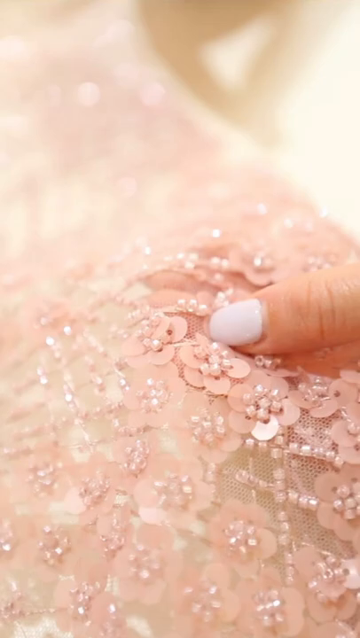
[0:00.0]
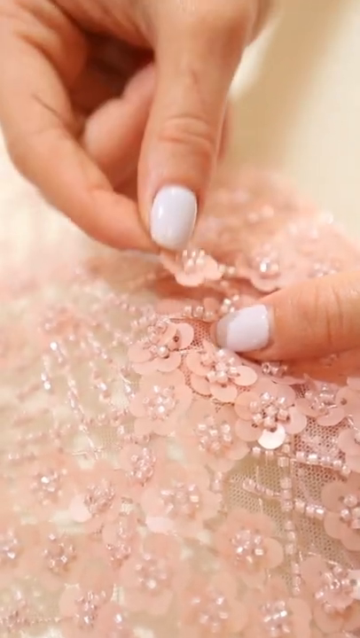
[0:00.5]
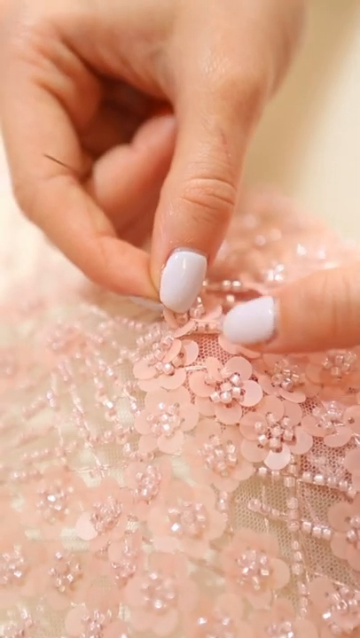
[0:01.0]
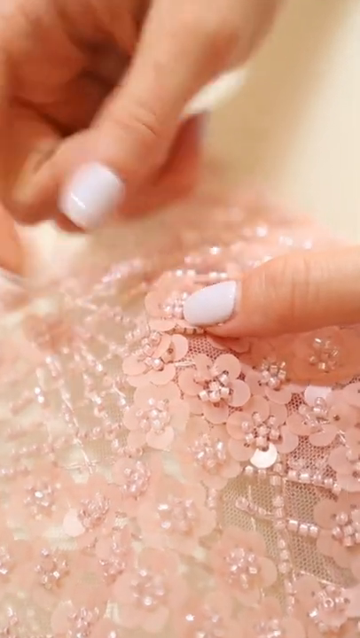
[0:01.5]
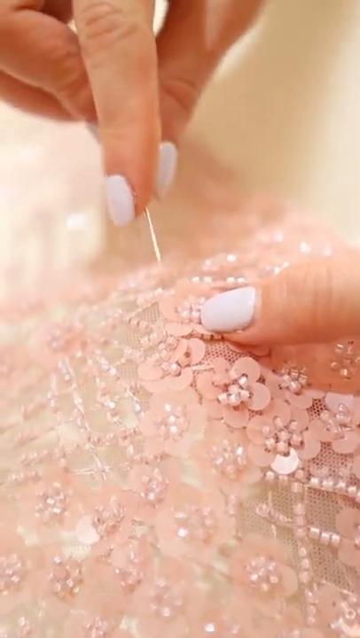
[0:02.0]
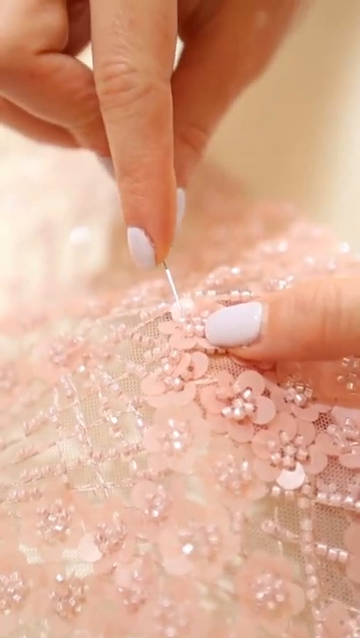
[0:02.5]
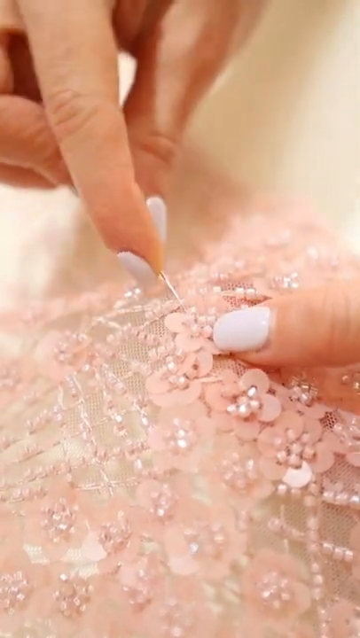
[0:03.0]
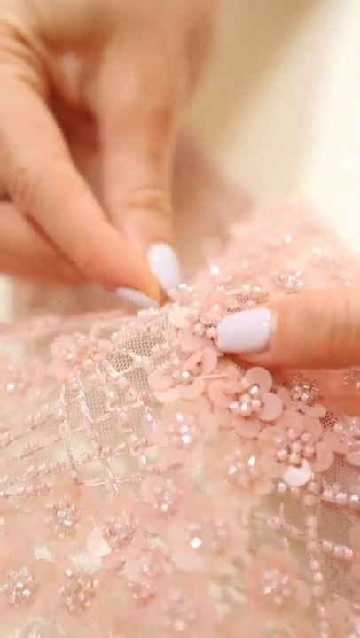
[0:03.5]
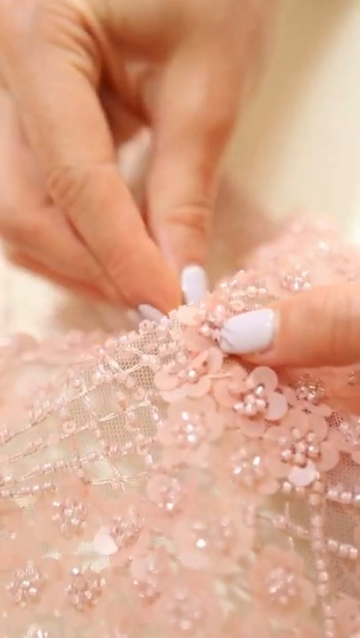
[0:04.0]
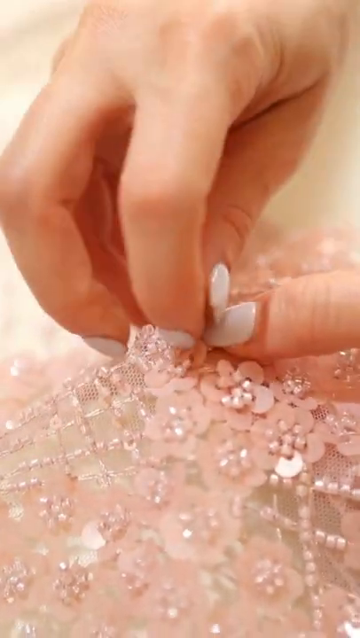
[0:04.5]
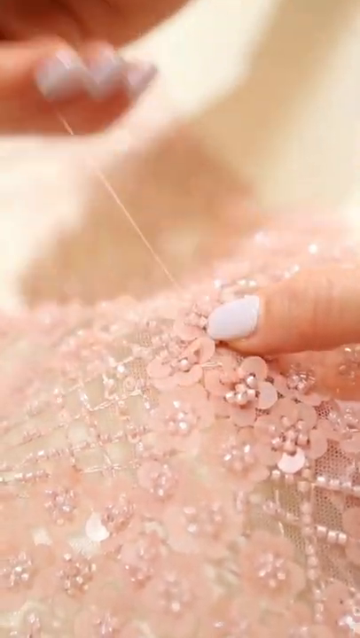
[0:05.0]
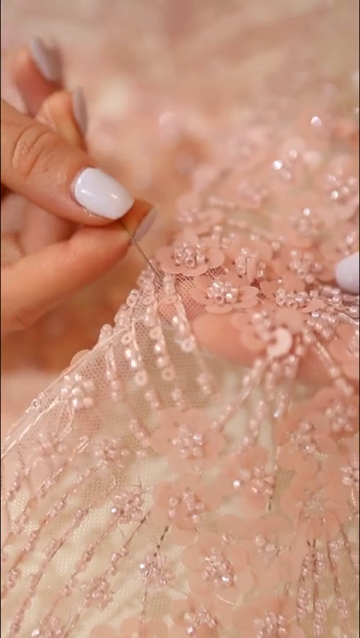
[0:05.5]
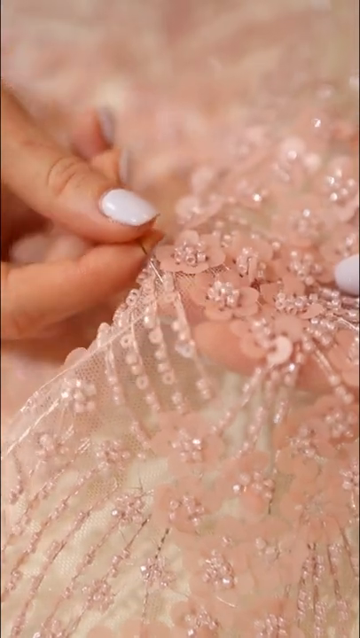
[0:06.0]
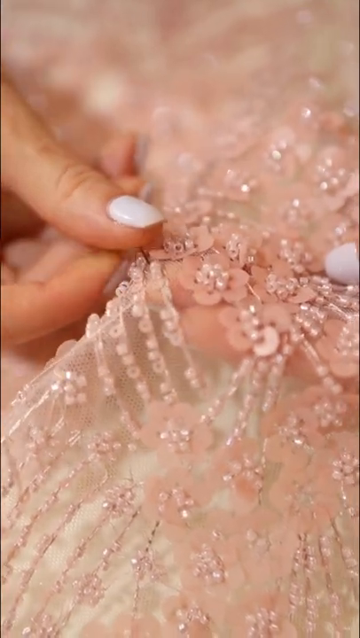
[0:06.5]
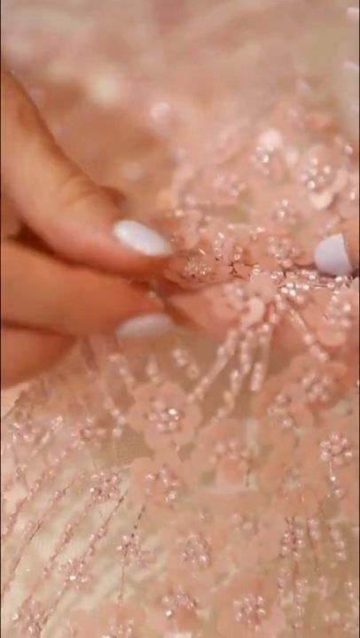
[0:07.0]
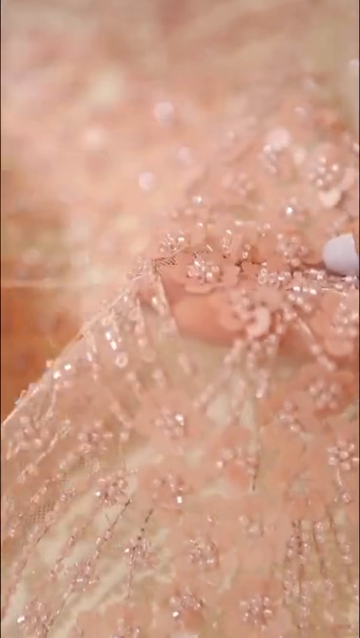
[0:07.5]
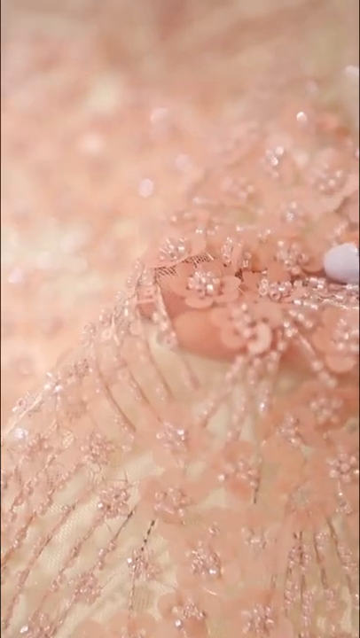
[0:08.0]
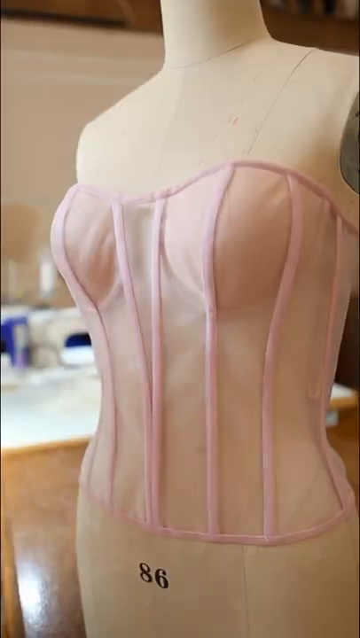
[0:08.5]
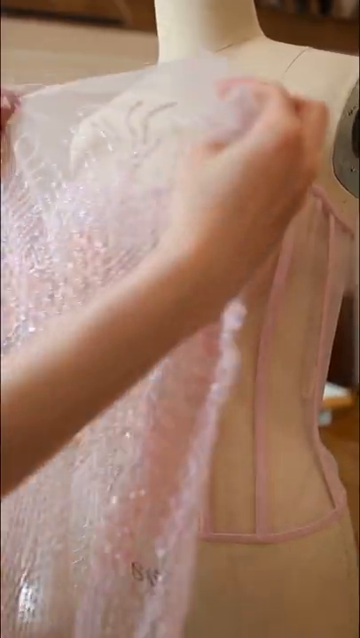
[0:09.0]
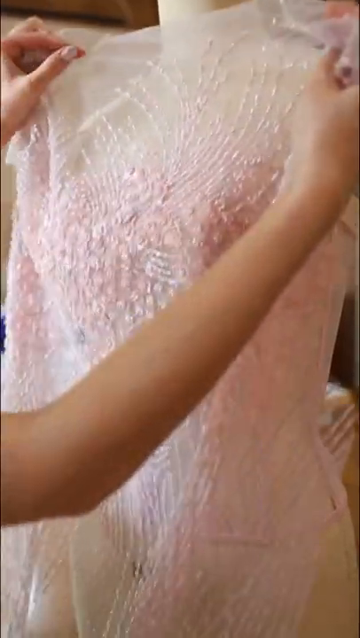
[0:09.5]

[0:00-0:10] Pale pink lace fabric is intricately designed with hundreds of tiny flower appliques adorned with tiny pink pearls, seven pearl adornments on each tiny flower. A lady's hands sew each applique by hand onto the delicate lace fabric; she wears white nail polish. She takes the fabric and places it up to a mannequin, getting ready to attach it to the bodice area. She drapes the fabric over the bodice of the mannequin, where the boning that will make up the base of what looks like a dress is visible. The dressmaker delicately hangs the lace fabric across the mannequin to see how it will lay against the bodice.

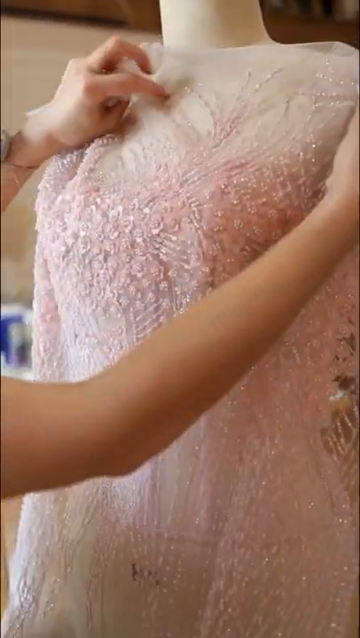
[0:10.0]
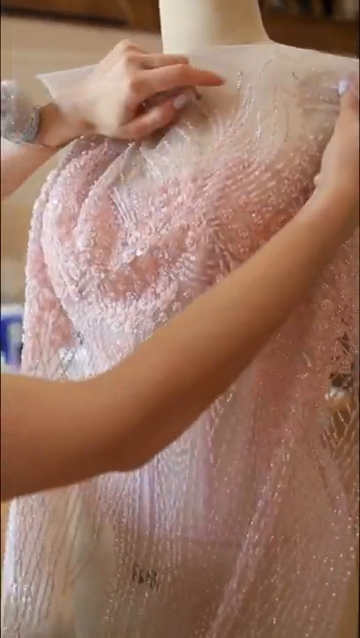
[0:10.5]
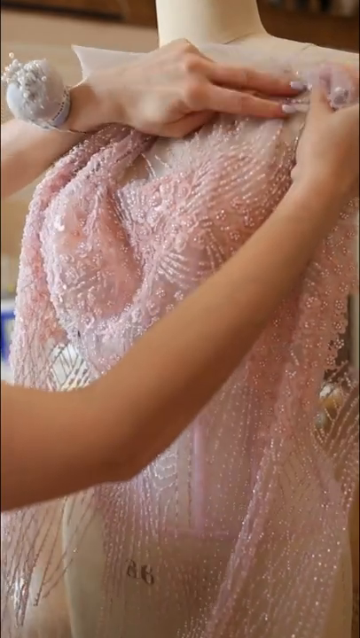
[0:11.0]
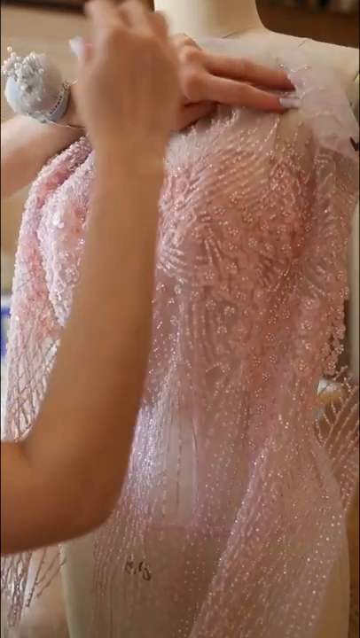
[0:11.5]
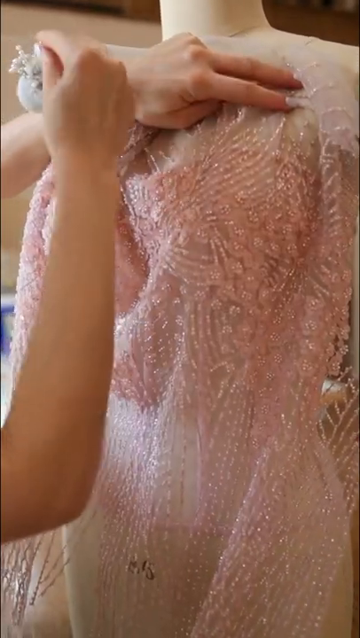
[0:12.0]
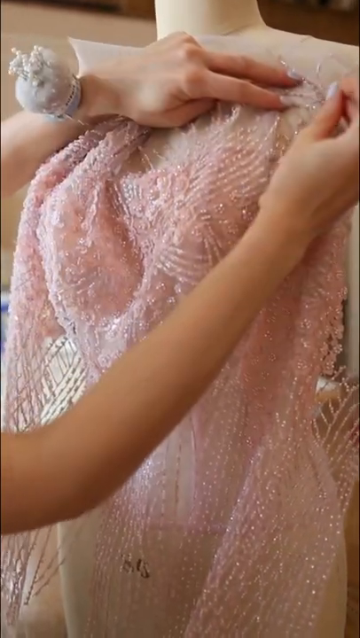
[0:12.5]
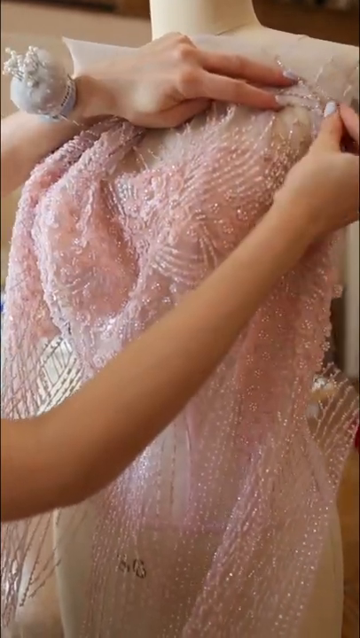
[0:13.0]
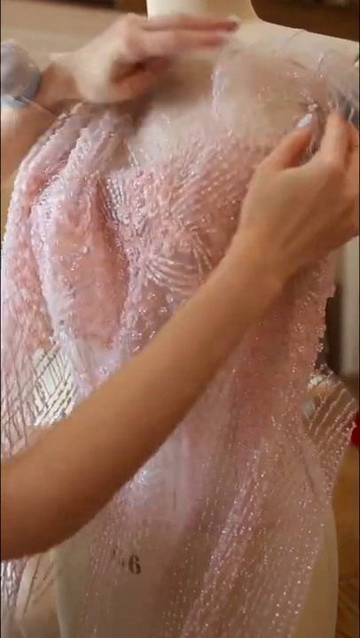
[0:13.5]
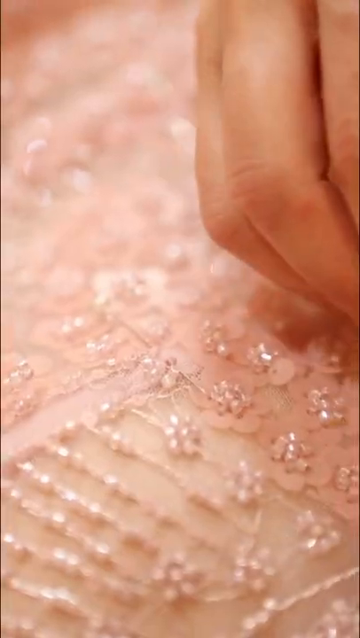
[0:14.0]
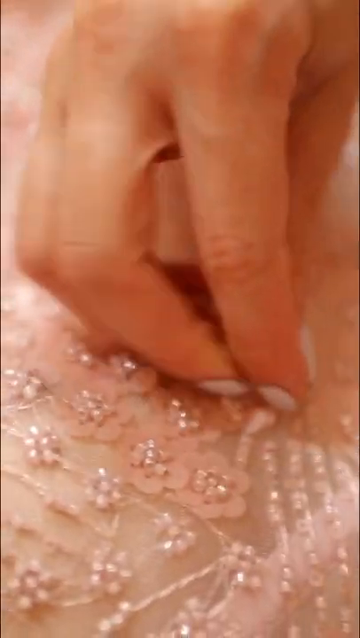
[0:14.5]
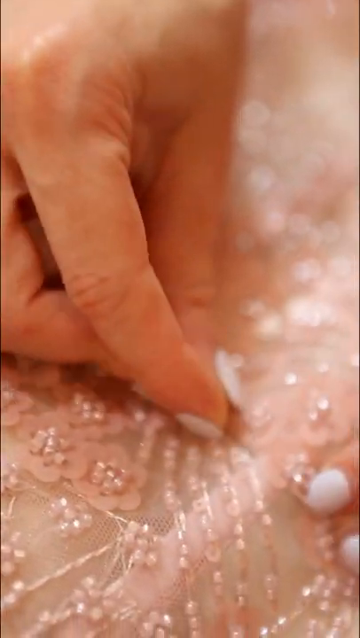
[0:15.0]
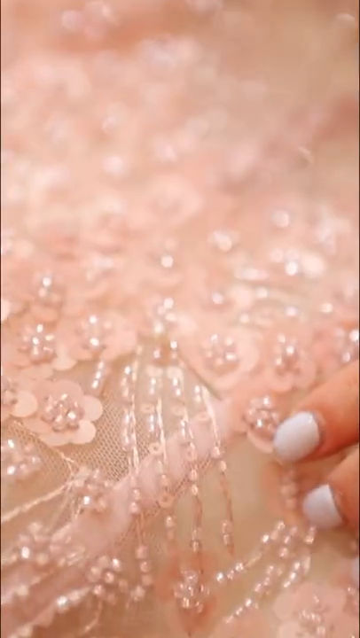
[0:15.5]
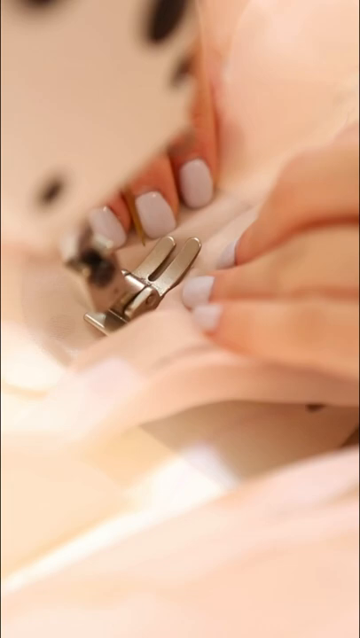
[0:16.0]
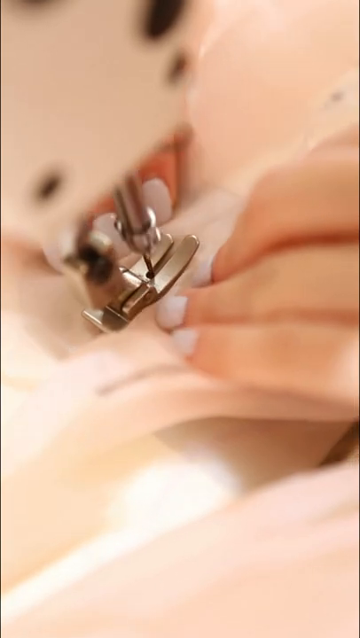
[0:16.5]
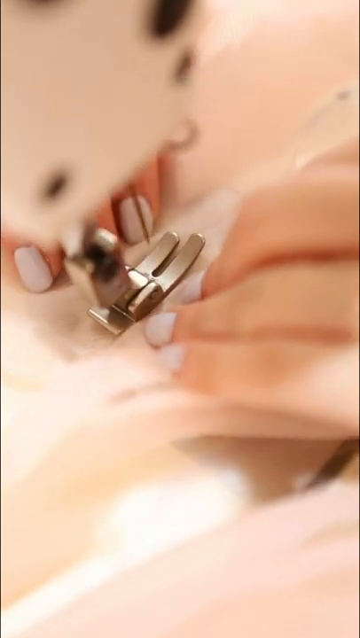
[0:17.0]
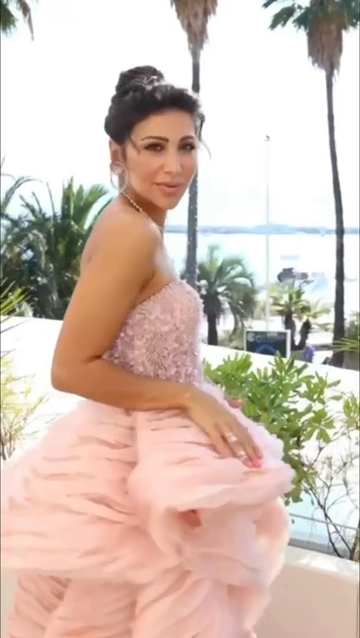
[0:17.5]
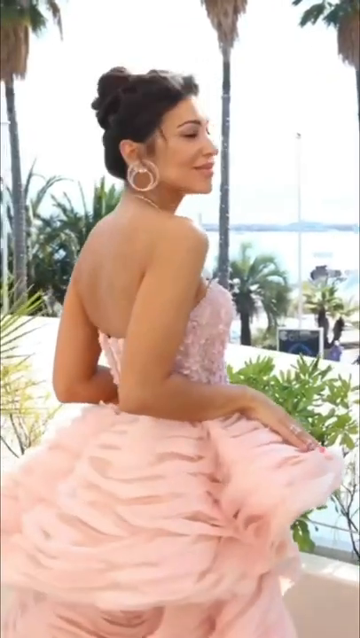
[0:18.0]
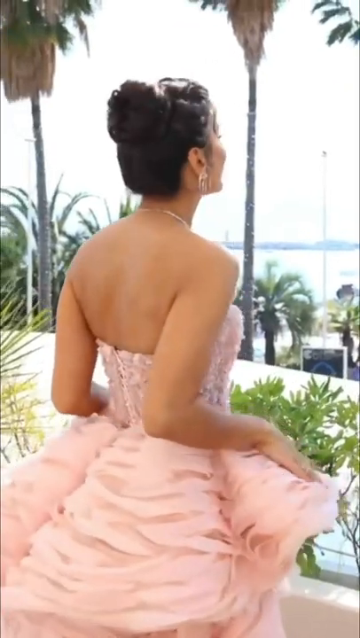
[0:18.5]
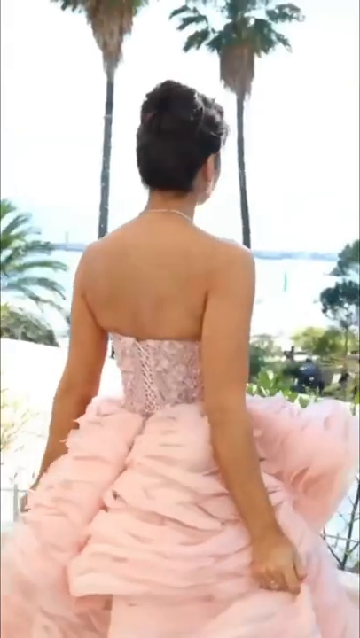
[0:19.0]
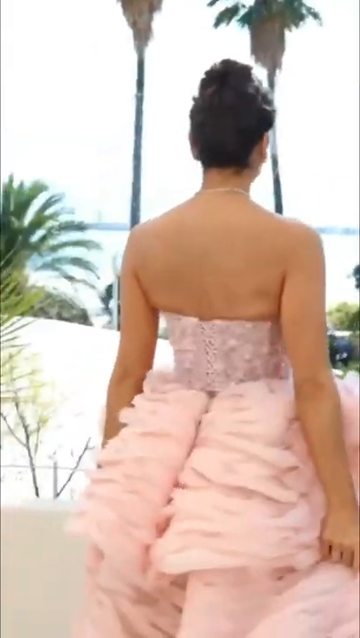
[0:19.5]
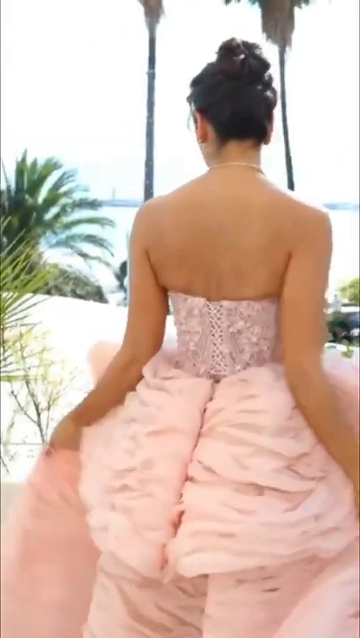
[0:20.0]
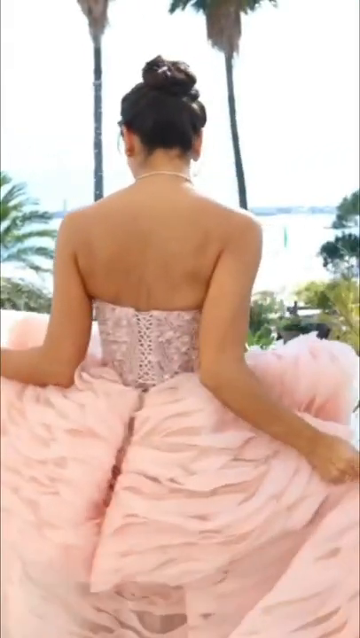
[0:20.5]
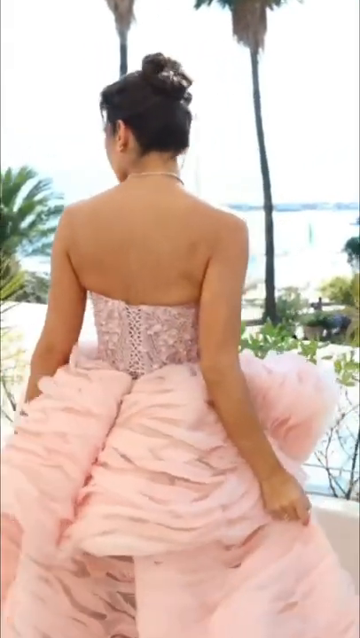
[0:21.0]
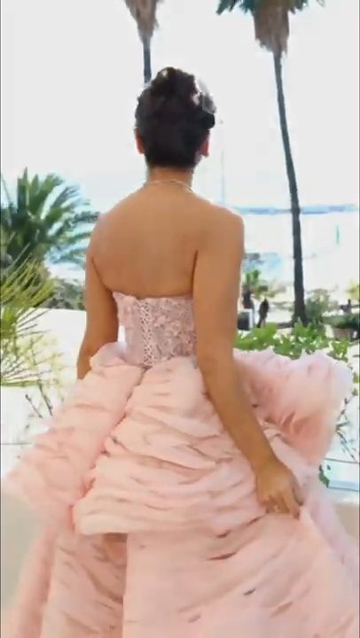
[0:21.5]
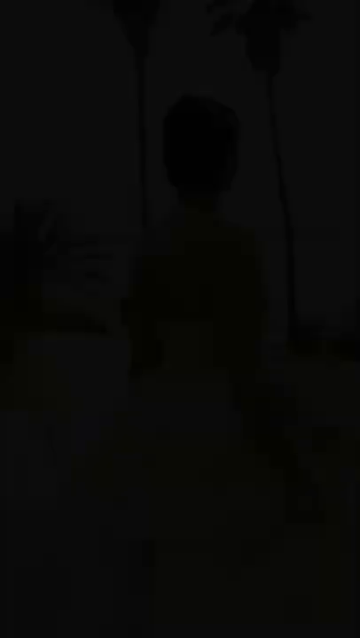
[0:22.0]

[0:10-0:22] The dressmaker pins the delicate lace fabric onto the mannequin up near the shoulder area. Her entire body is not visible, only her forearms and hands, along with the pins she uses to attach the material to the shoulder area. She wears white nail polish and has a white pin cushion on her left wrist. She appears to be pinning the fabric in place to see how it hangs on the dress before sewing it together. Next, a model looks like she is modeling the dress outside, perhaps in a commercial. Then the dressmaker sews the dress, feeding the fabric into a sewing machine as the machine makes stitches in the fabric.